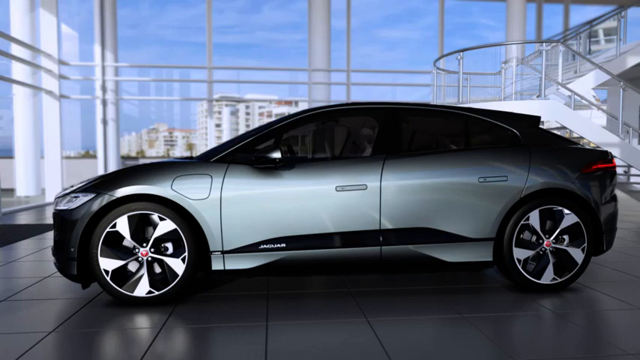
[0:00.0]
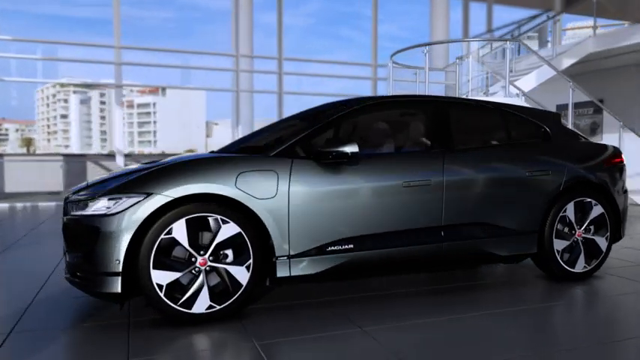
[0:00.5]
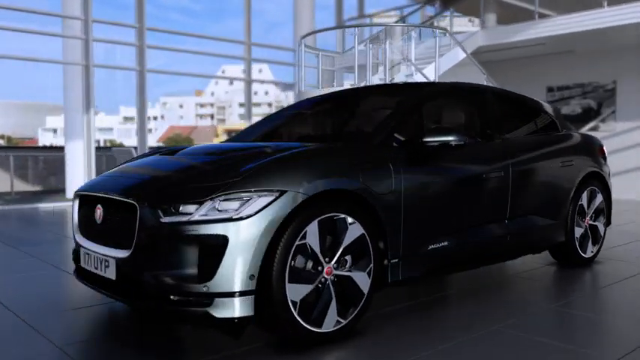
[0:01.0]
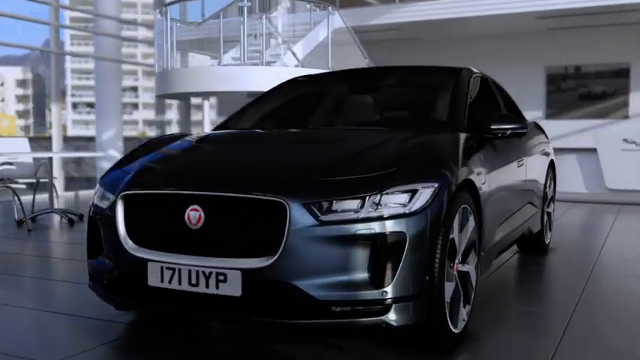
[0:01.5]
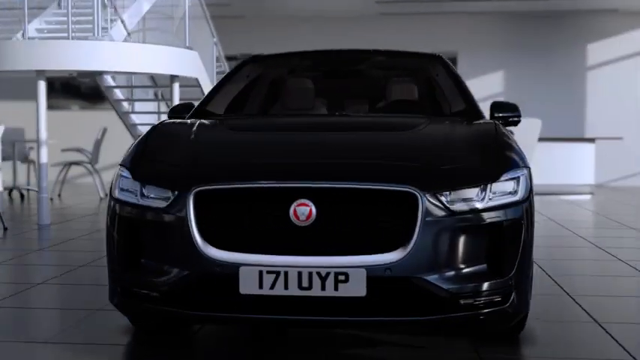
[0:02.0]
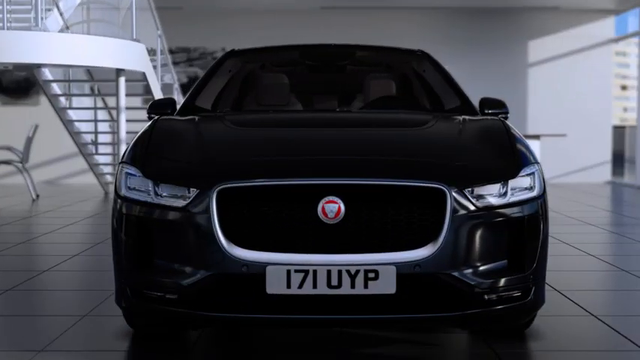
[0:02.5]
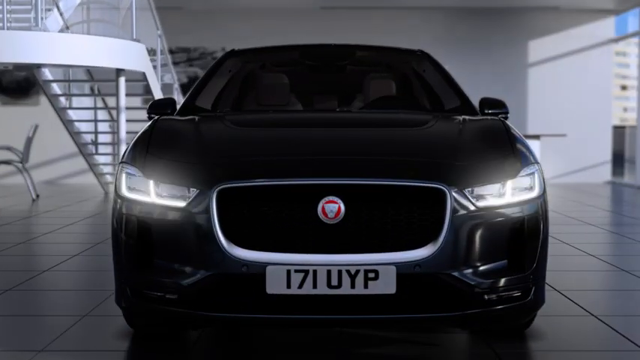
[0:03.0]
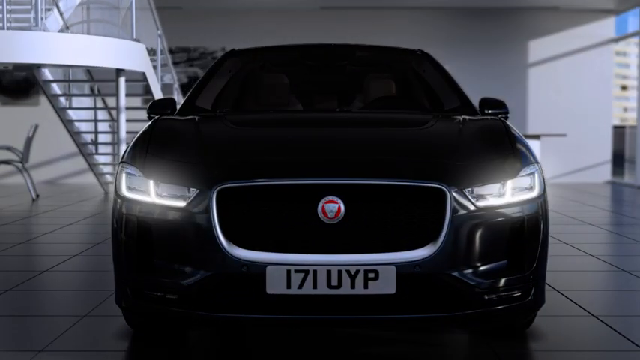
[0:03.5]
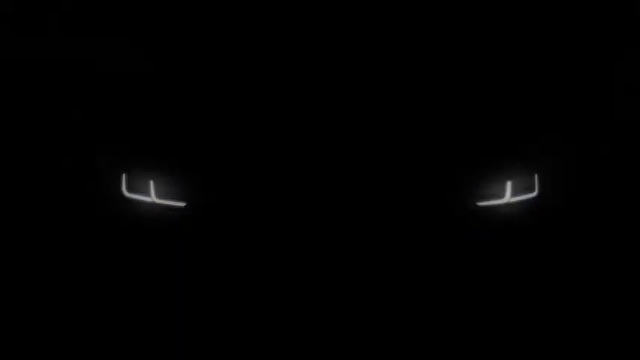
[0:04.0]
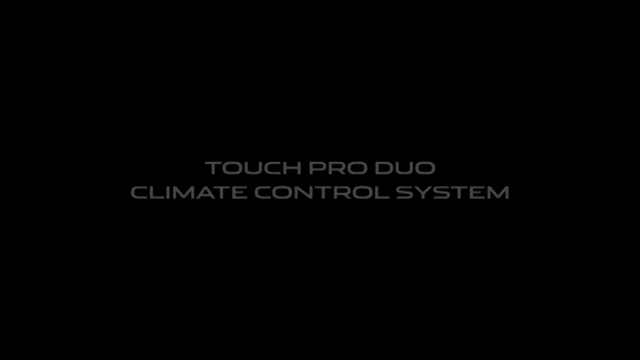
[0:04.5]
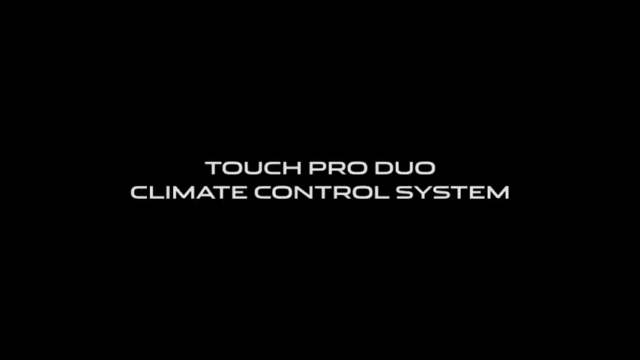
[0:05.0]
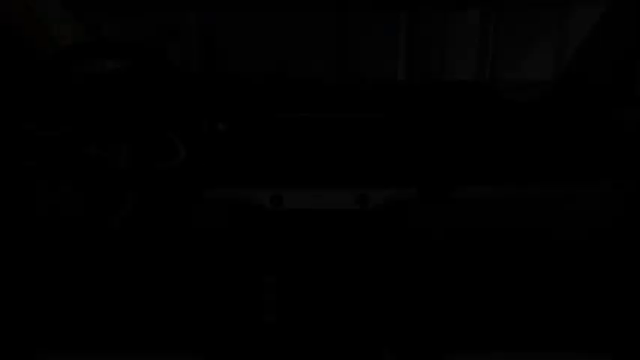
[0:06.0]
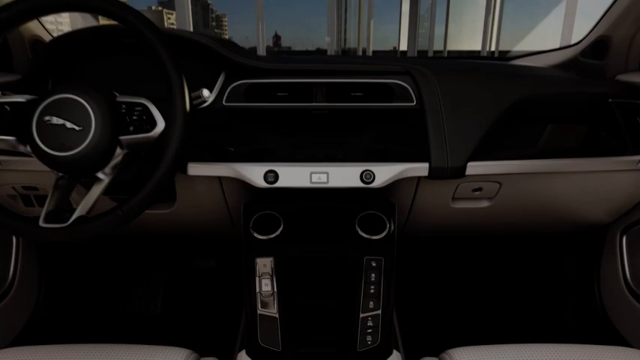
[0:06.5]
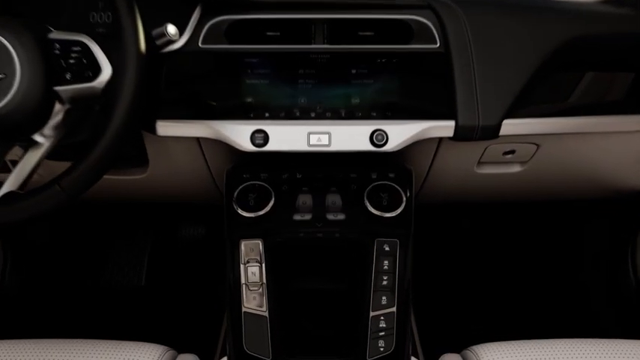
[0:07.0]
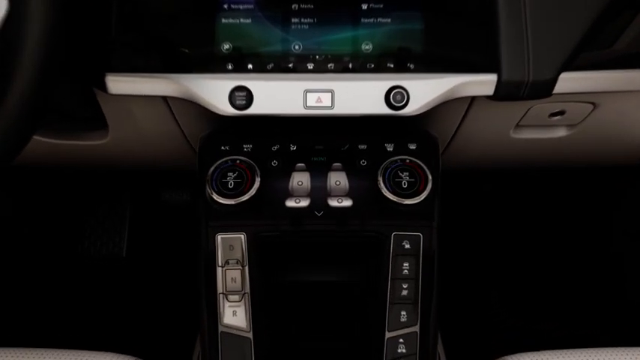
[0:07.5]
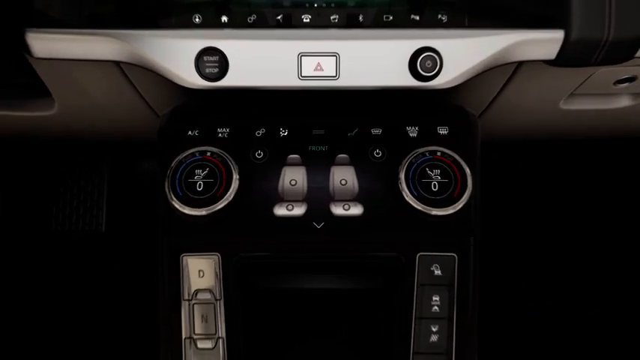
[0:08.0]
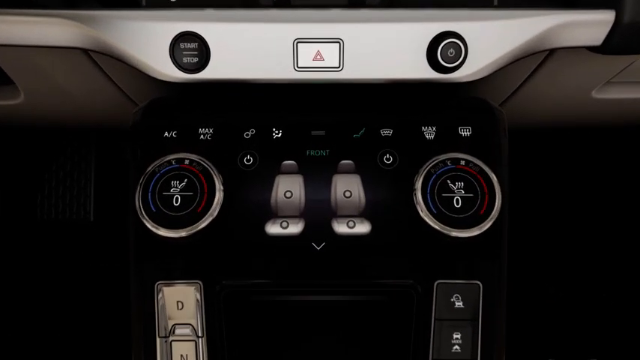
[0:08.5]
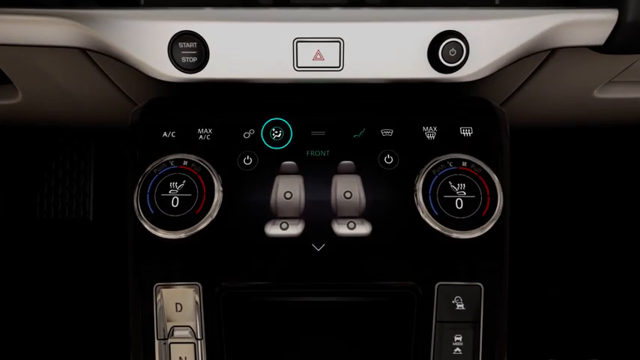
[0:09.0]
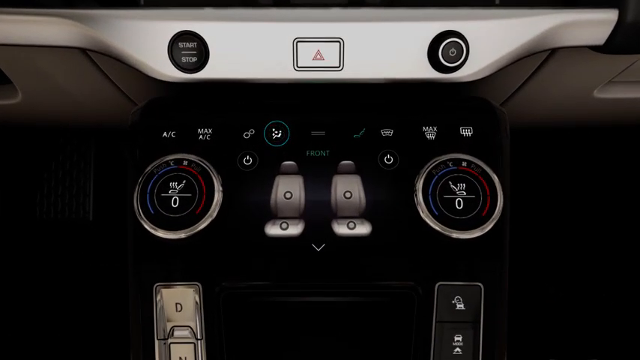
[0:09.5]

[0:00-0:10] A side view shows a sleek silver car with a dark strip along the bottom of the side doors and, under the driver's side door, the word "Jaguar". The vehicle is sitting on a tiled floor in what looks like a car showroom. Large windows cover the background and look out over a cityscape of white multi-storey buildings, in line with the windscreen and hood, with a blue sky above. Behind the vehicle is a staircase with a banister that reaches a platform, then goes round and up again in the opposite direction. The view spins round to show the front of the vehicle, where there is a logo on the front grill and the registration plate reads "171 UYP".